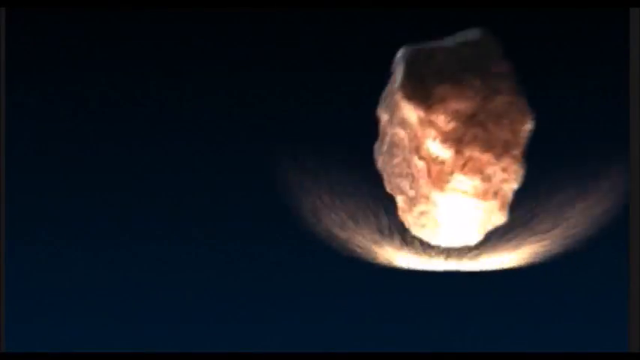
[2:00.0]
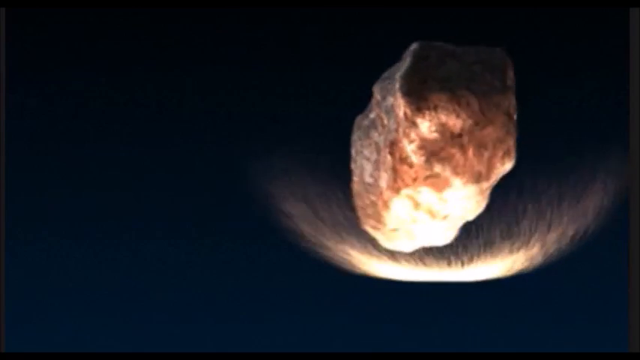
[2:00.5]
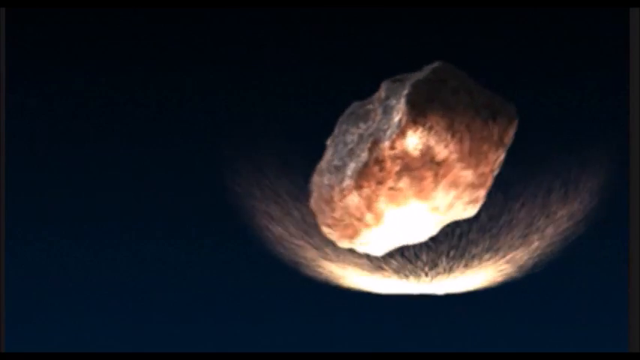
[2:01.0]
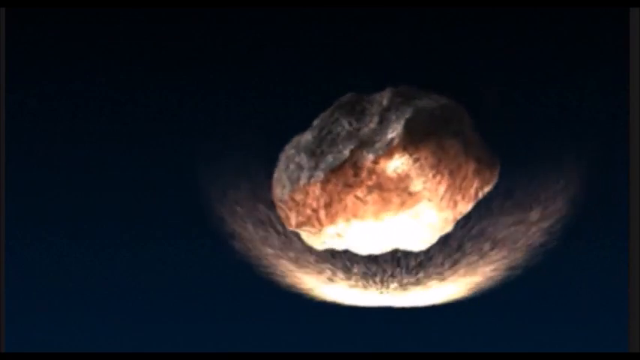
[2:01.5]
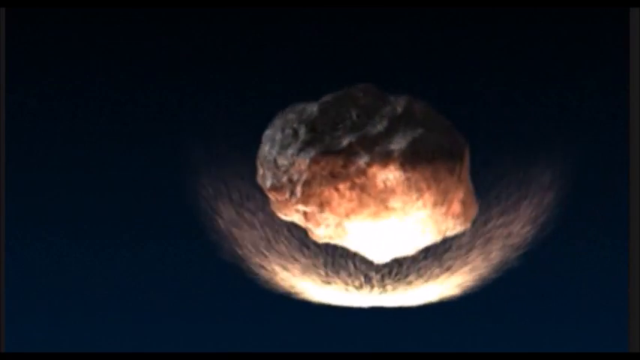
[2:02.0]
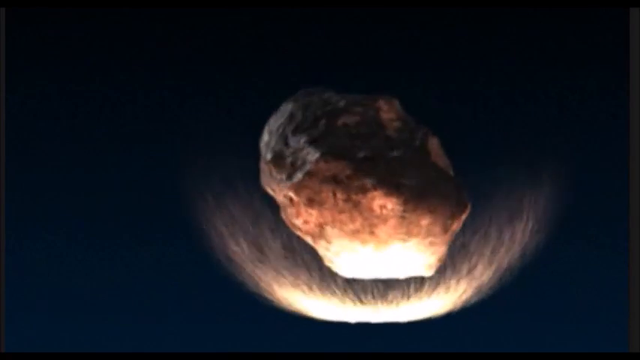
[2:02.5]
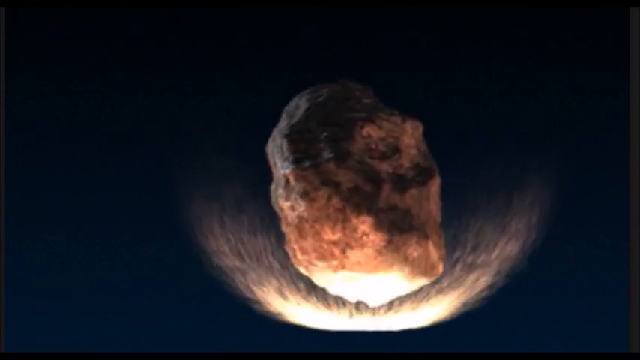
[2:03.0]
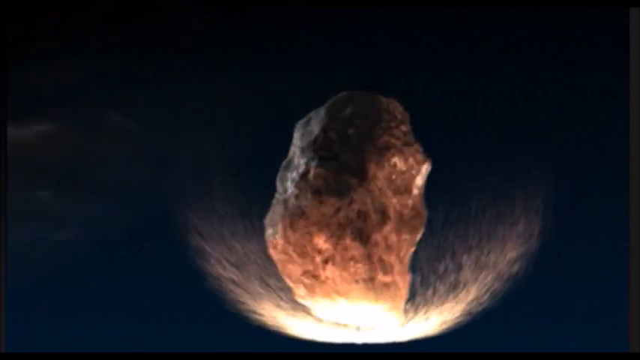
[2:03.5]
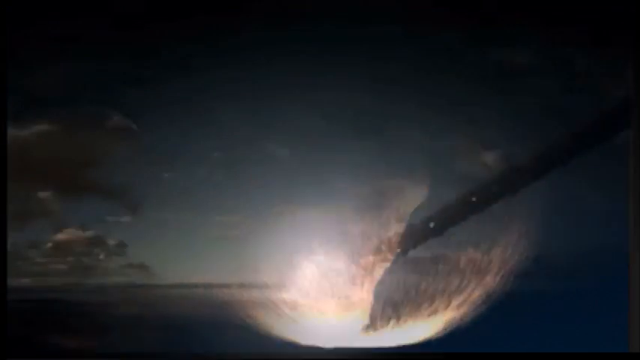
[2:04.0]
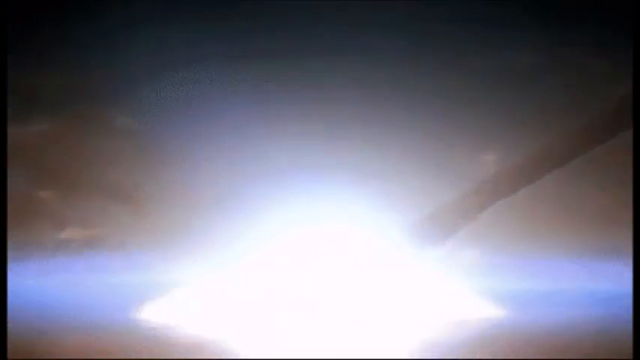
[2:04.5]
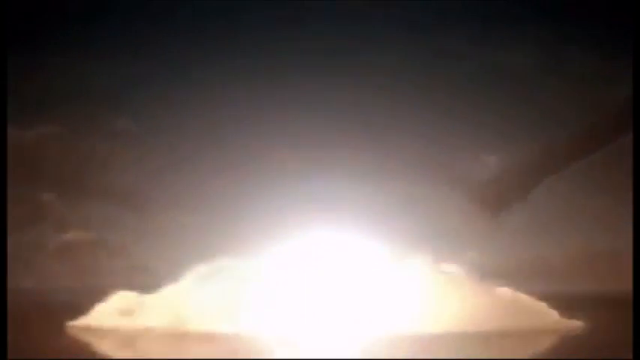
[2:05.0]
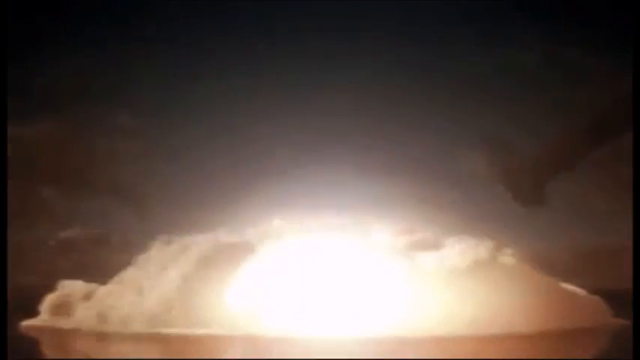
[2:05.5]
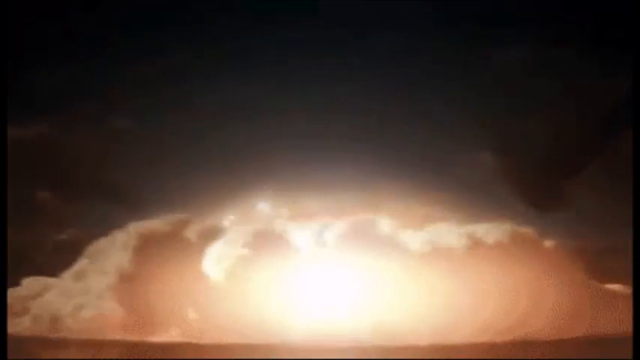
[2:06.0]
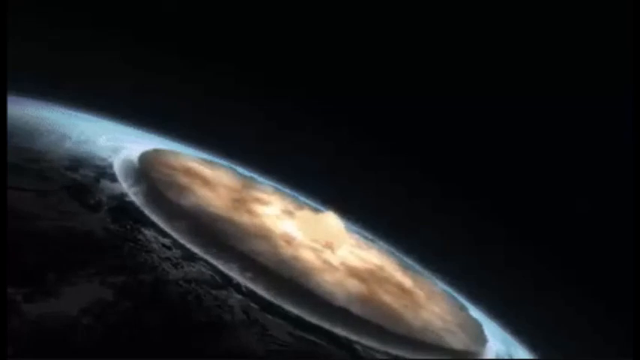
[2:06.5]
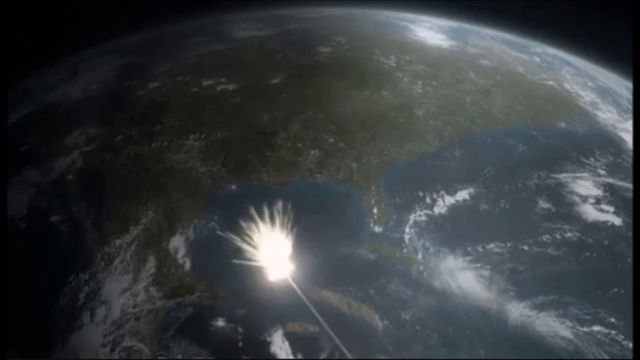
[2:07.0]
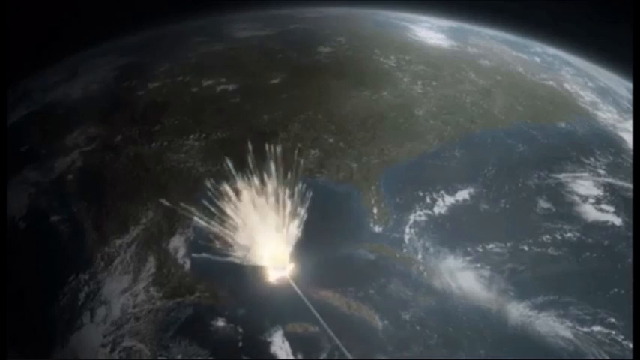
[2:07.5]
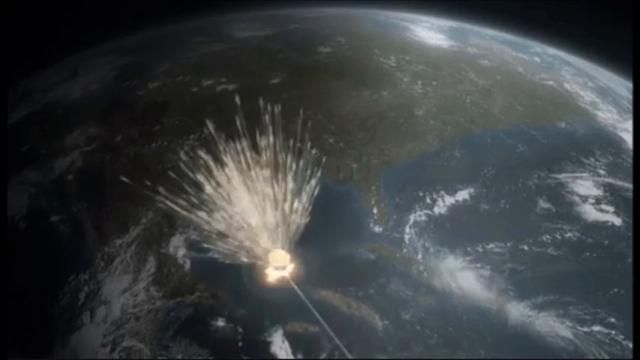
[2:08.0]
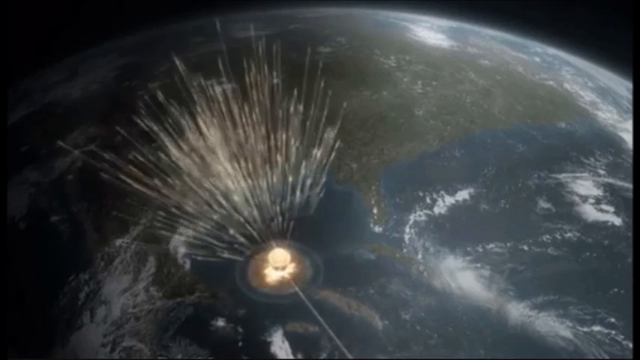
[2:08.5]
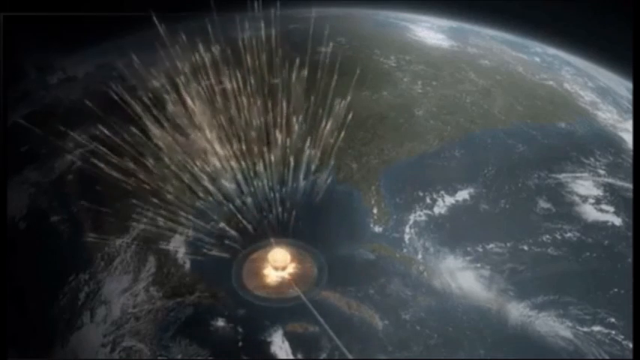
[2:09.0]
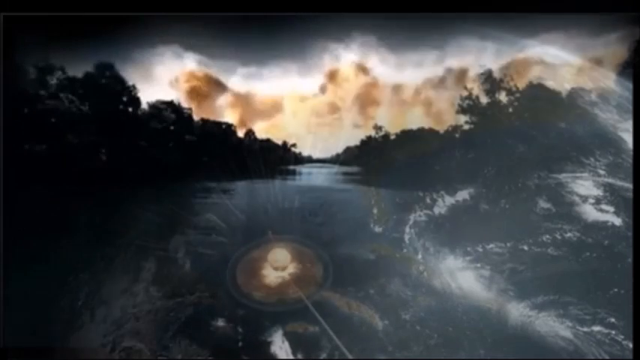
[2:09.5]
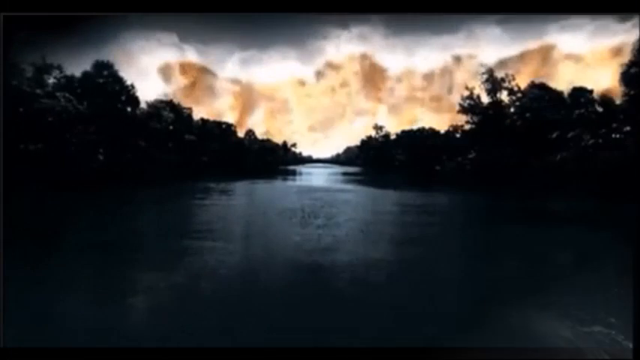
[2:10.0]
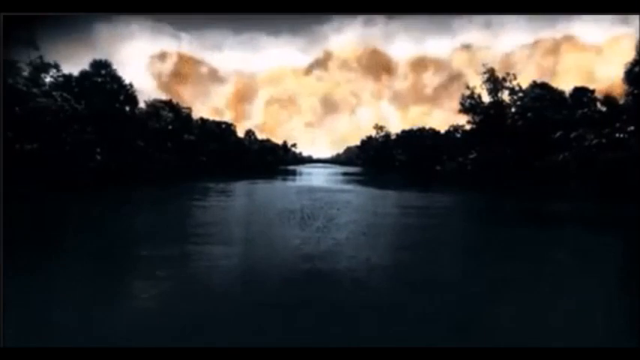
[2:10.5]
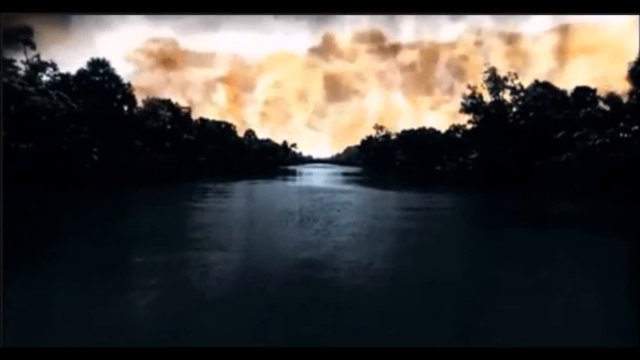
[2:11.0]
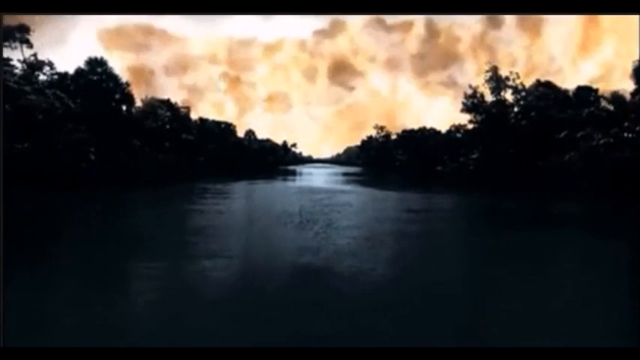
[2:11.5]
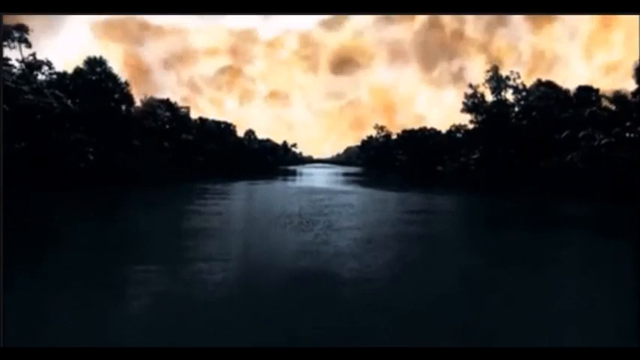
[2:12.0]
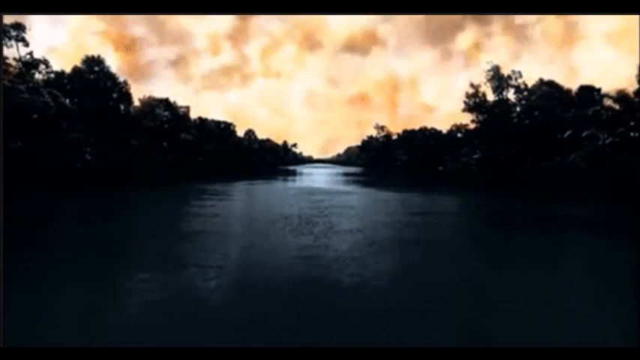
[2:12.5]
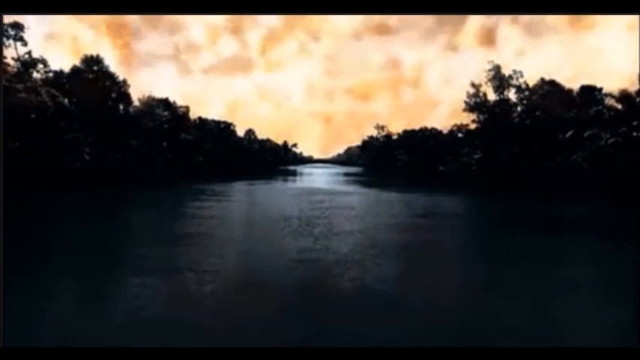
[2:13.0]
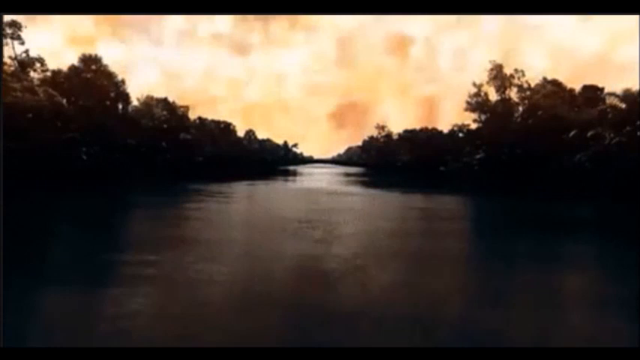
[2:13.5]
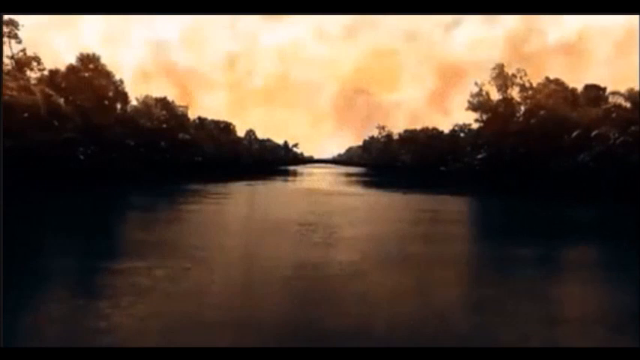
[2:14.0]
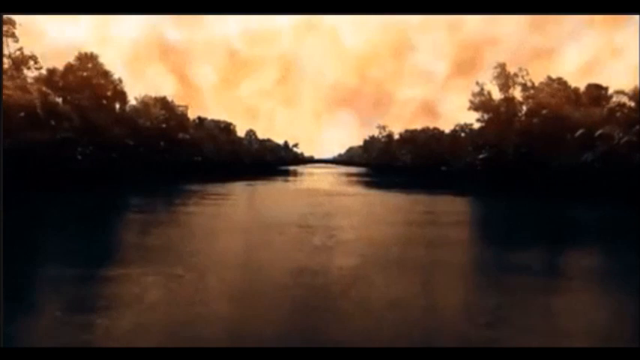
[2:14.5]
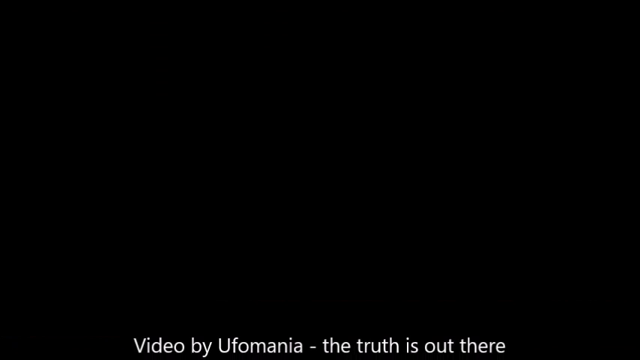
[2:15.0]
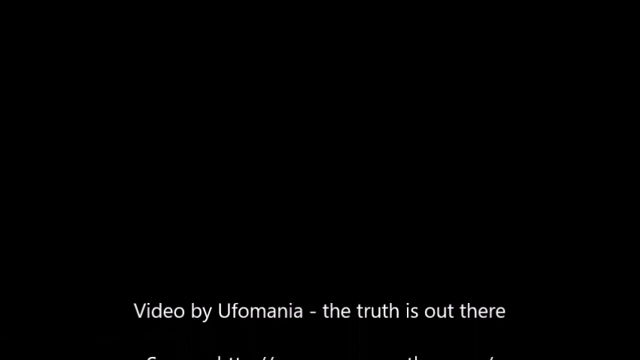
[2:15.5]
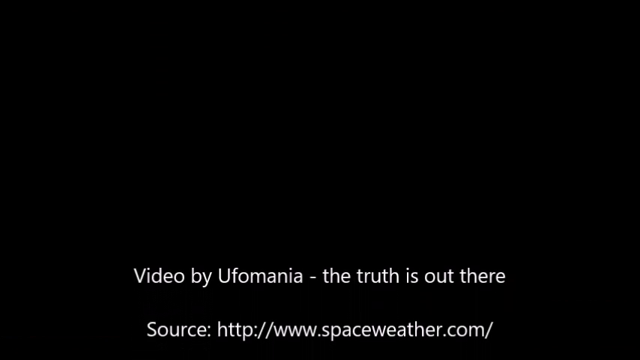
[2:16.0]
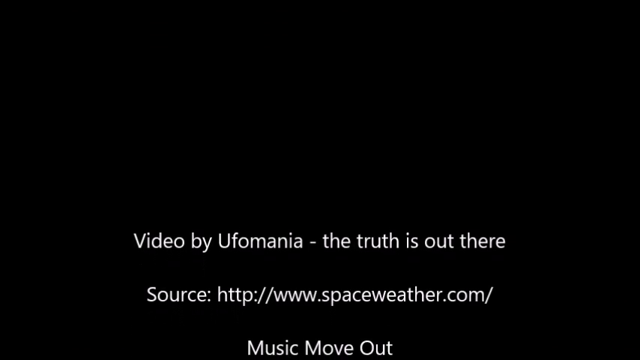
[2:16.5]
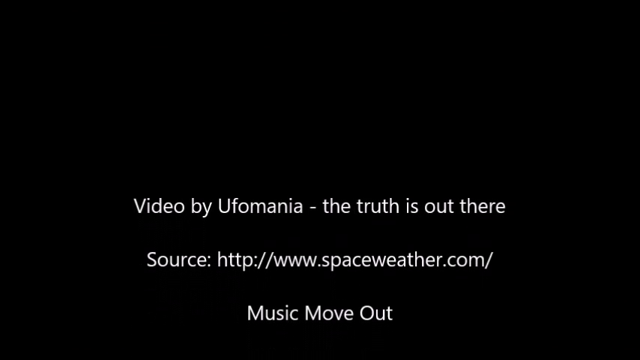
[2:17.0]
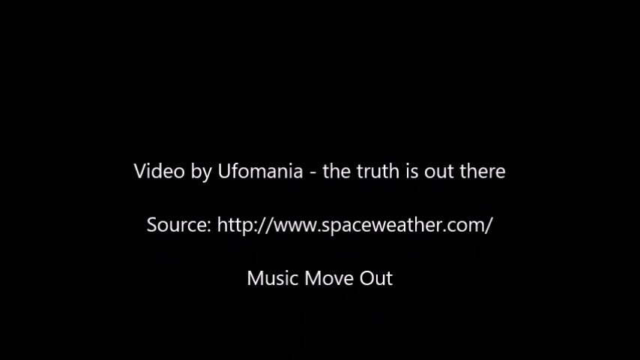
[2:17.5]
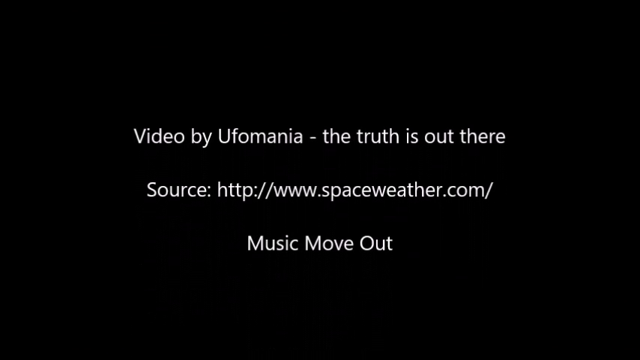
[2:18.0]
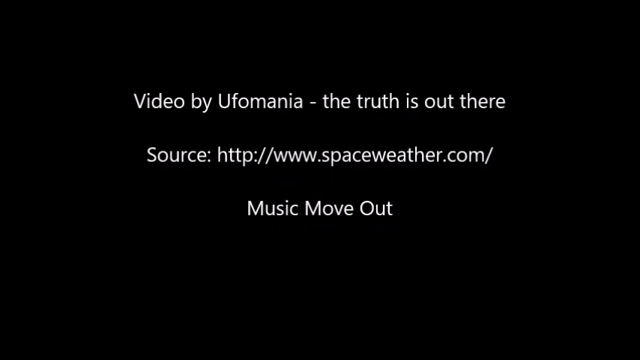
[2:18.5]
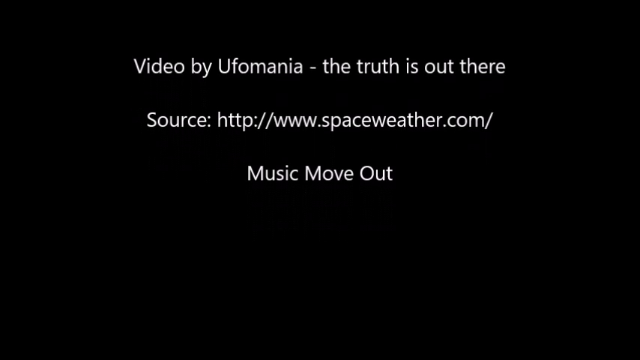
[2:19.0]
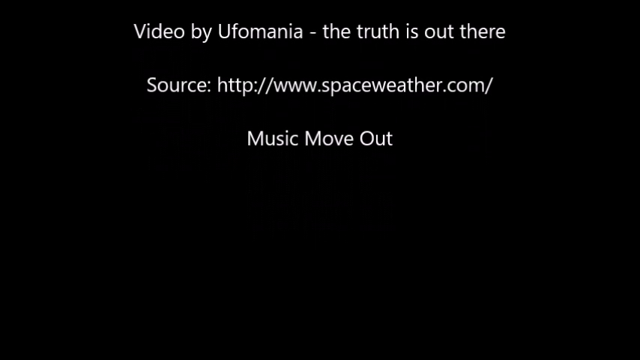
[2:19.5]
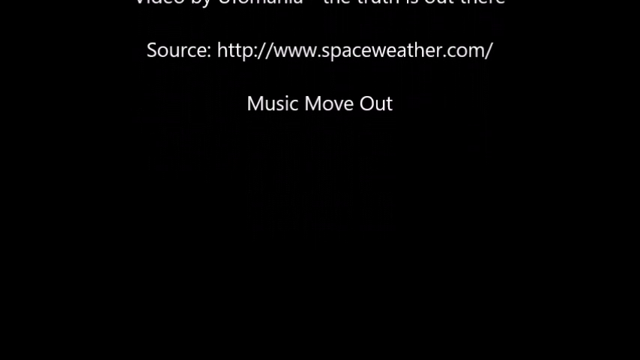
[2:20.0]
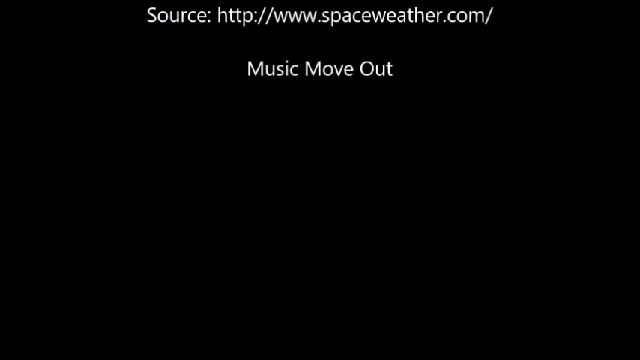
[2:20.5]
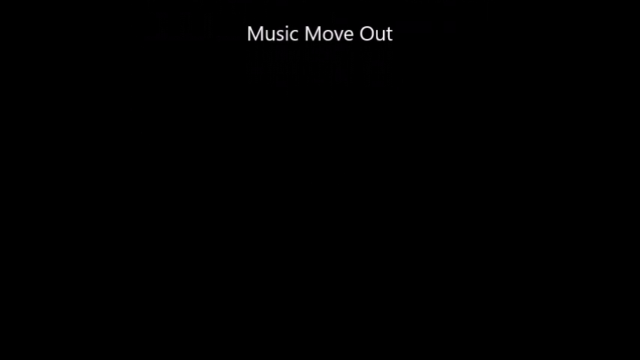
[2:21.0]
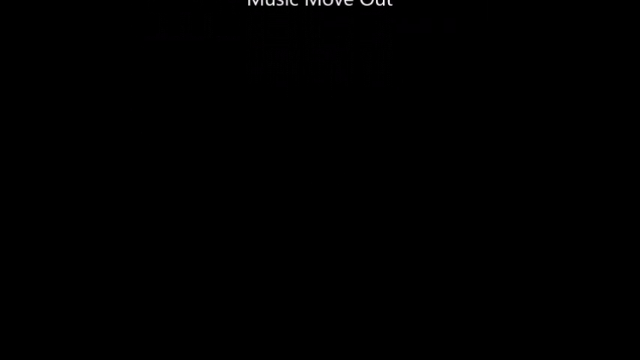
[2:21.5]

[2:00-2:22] The very dark blue background continues. On the right side, from about an inch below the top to about two inches above the bottom, is a big rock-like structure. It is a little darker at the top, very bright at the bottom, and somewhat orangey on the sides. Underneath it is a kind of halo coming out, and it looks like it is pushing through the atmosphere; the halo is lighter in front and darker on the sides. The rock tumbles clockwise as it shifts a little toward the left center, still rotating clockwise. A big explosion follows at the bottom, a bright light in a dark sky, and smoke rolls out and over. The scene cuts to an overhead shot of the globe with a big smoke cloud covering it. In another shot, toward the bottom, light shoots up from the water where it crashed, reaching almost to the top of the atmosphere. Next is a shot of a river at night with trees on the sides and rolling yellow smoke in the far distance coming toward the camera as the camera slowly moves in. It turns bright red, lighting up the trees and the water in red. Finally, a black background shows scrolling text: "Video by Ufomania. The truth is out there." Below that is "source HTTP//www.spaceweather.com/", and the text scrolls up off the top of the screen.